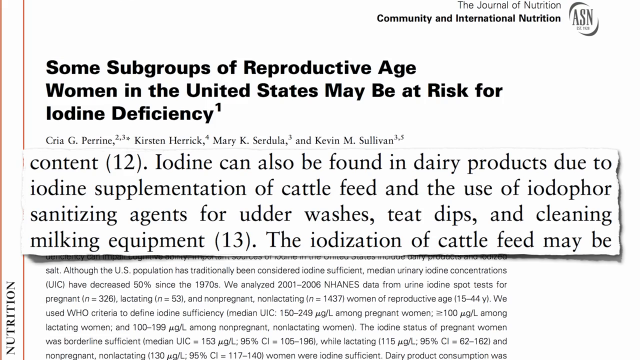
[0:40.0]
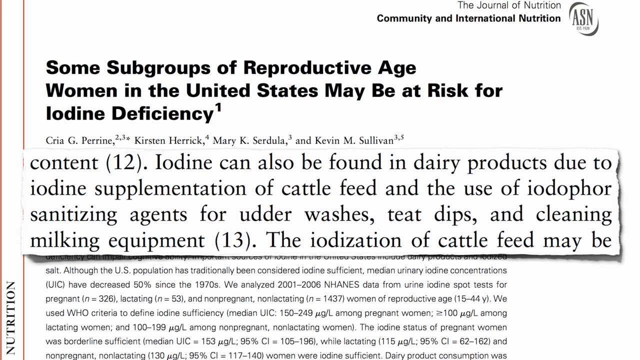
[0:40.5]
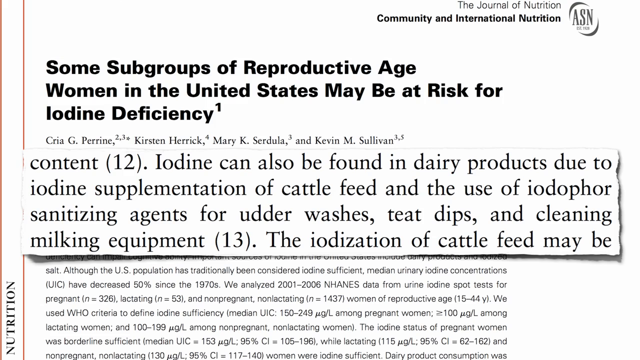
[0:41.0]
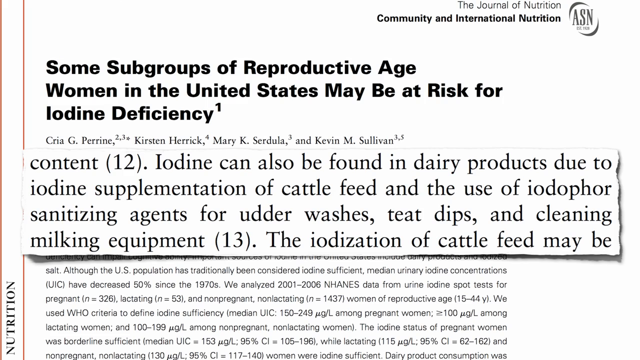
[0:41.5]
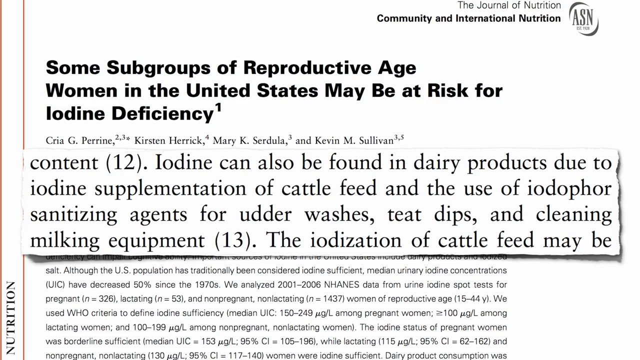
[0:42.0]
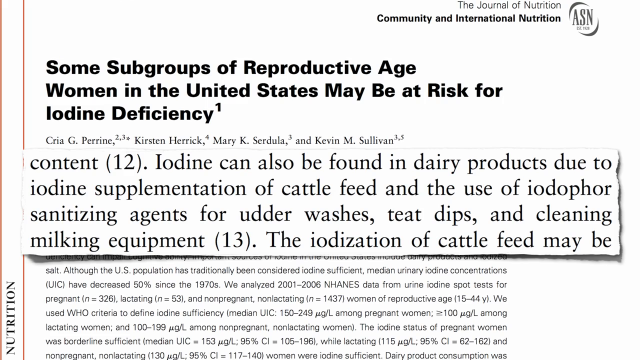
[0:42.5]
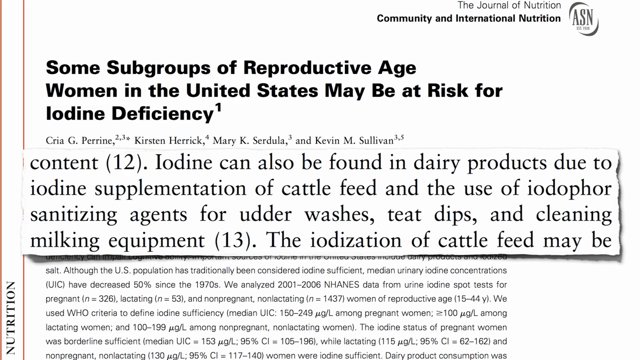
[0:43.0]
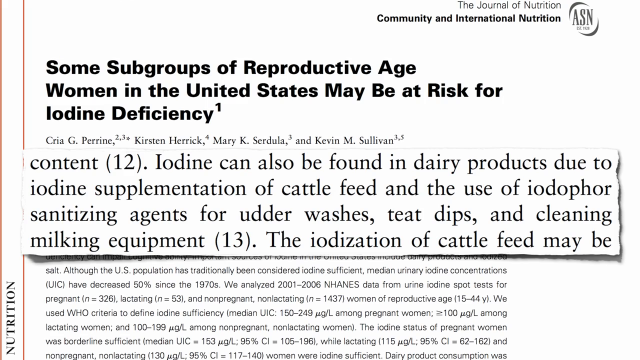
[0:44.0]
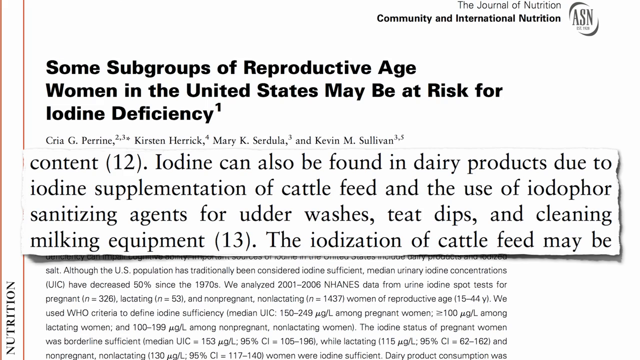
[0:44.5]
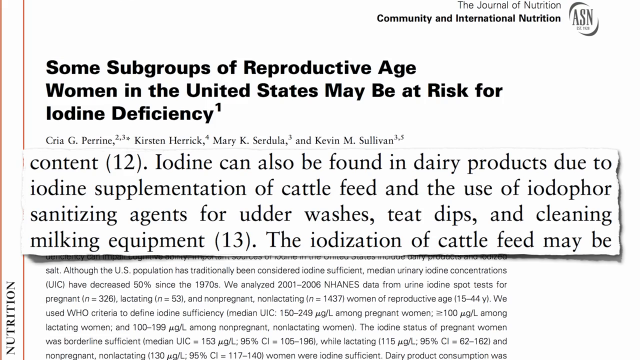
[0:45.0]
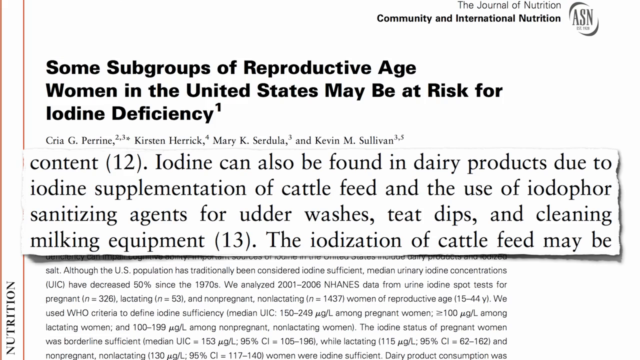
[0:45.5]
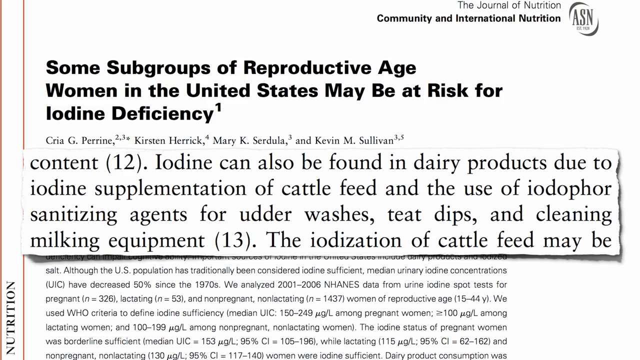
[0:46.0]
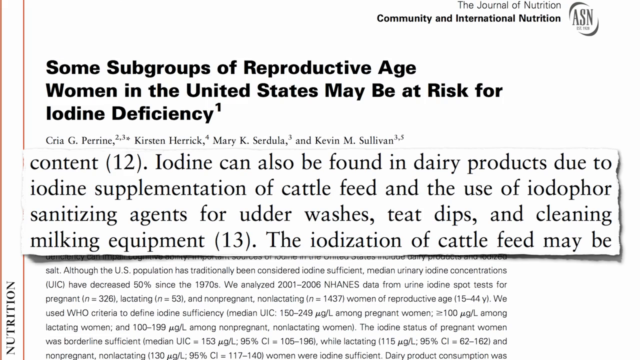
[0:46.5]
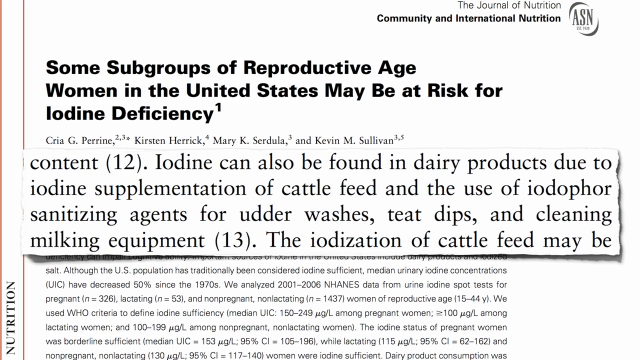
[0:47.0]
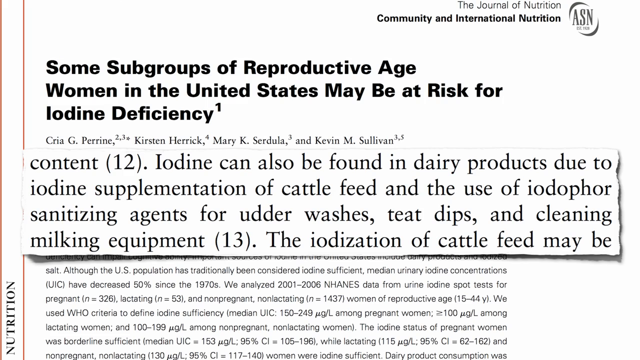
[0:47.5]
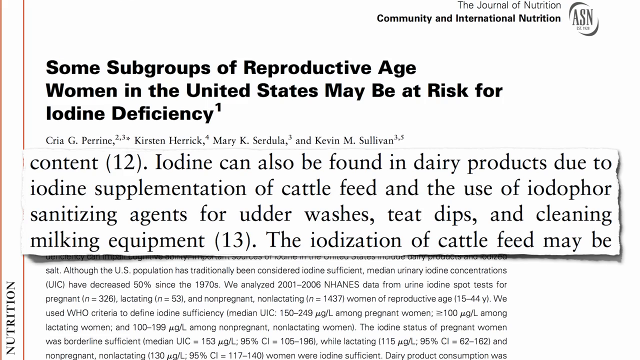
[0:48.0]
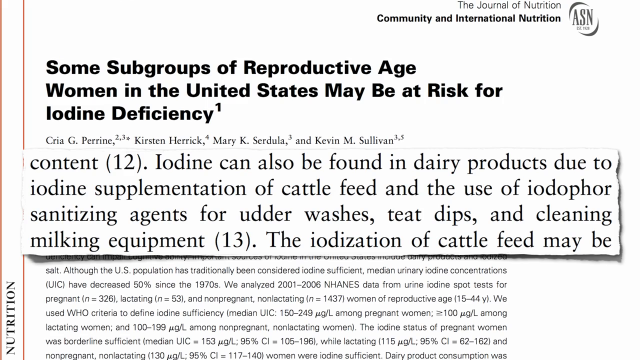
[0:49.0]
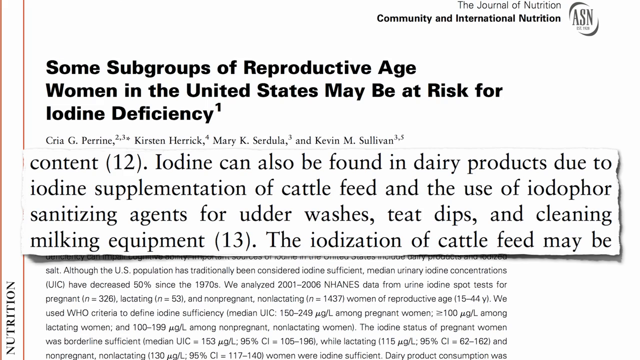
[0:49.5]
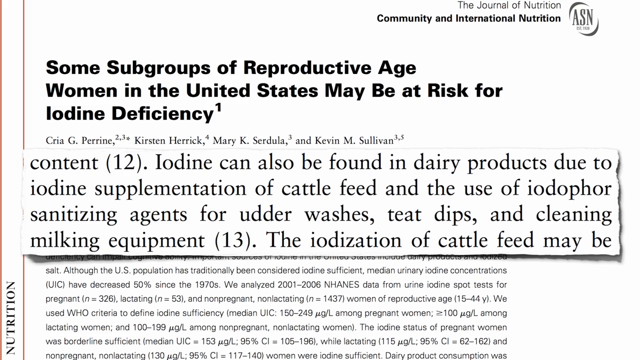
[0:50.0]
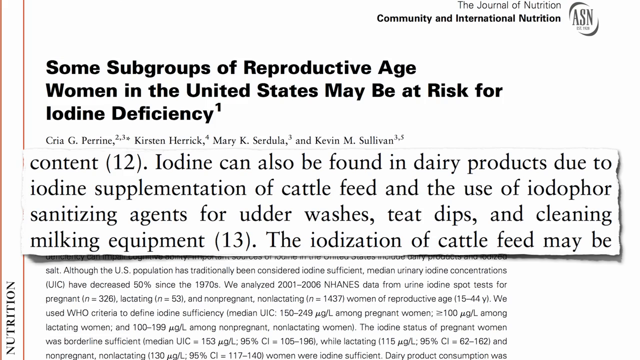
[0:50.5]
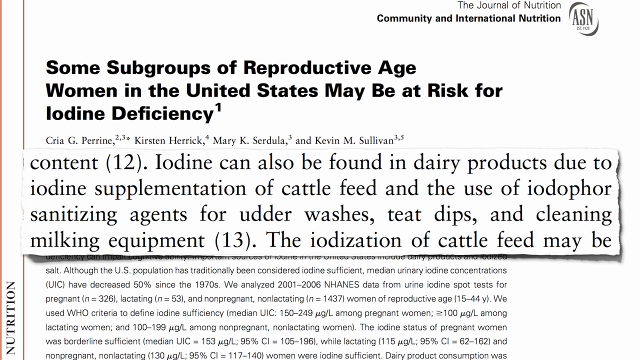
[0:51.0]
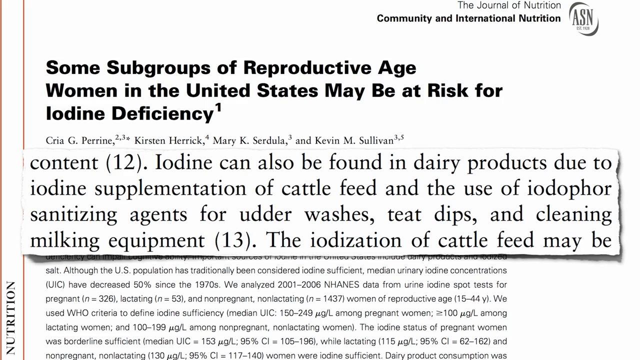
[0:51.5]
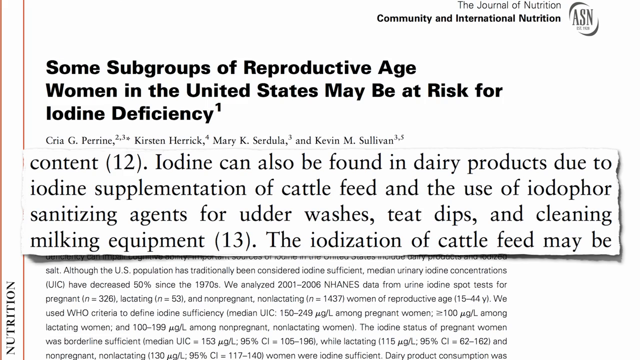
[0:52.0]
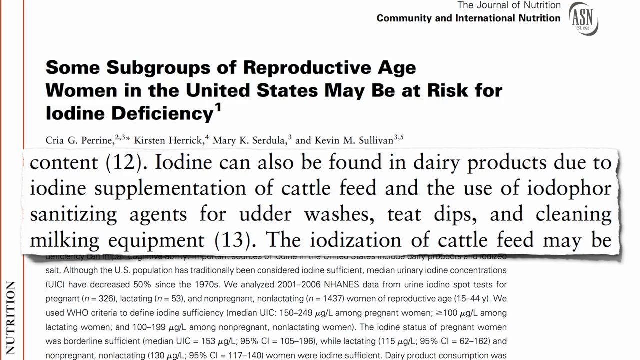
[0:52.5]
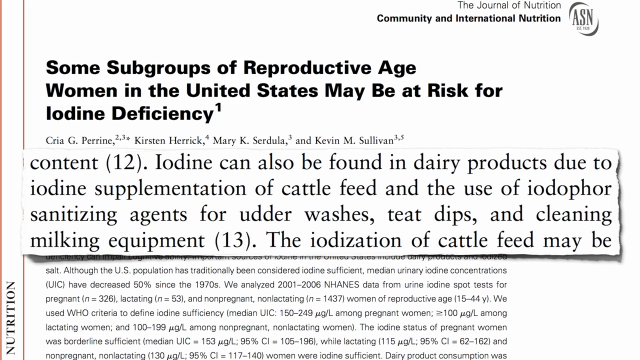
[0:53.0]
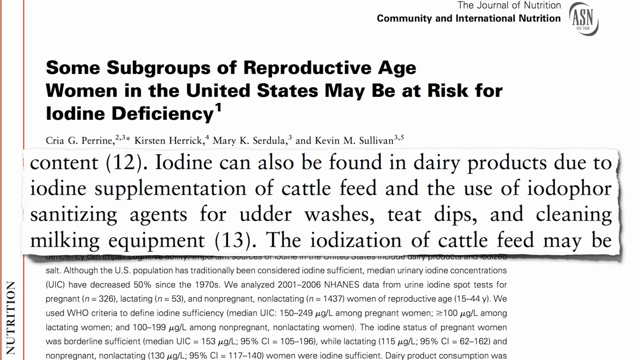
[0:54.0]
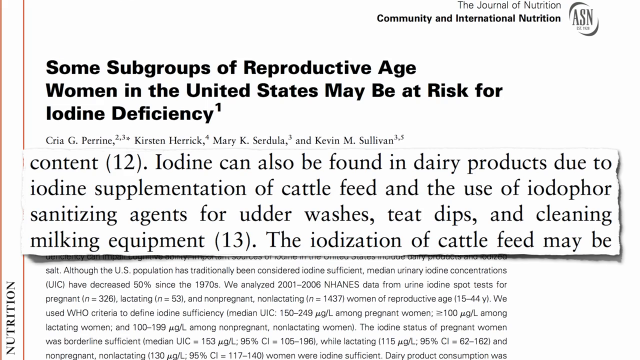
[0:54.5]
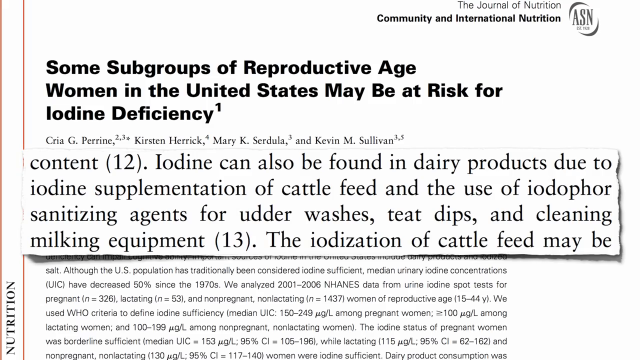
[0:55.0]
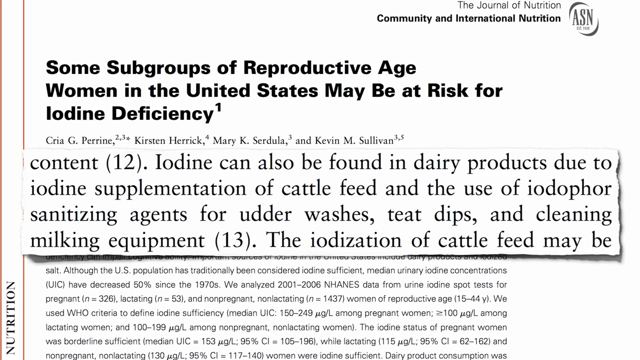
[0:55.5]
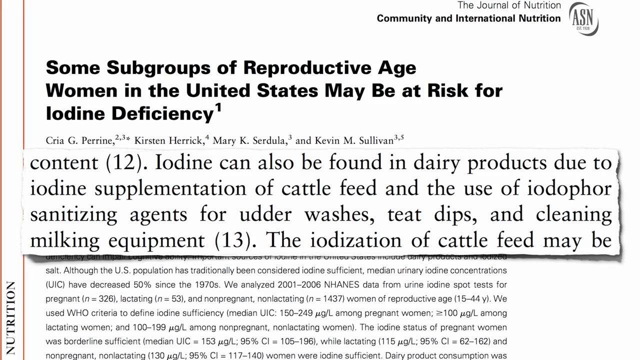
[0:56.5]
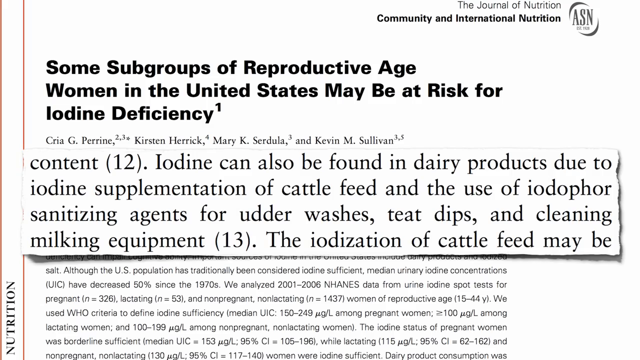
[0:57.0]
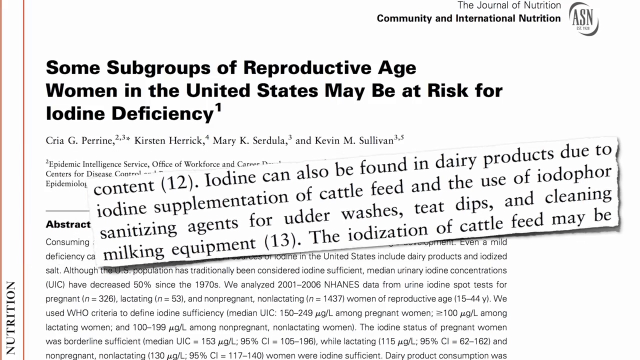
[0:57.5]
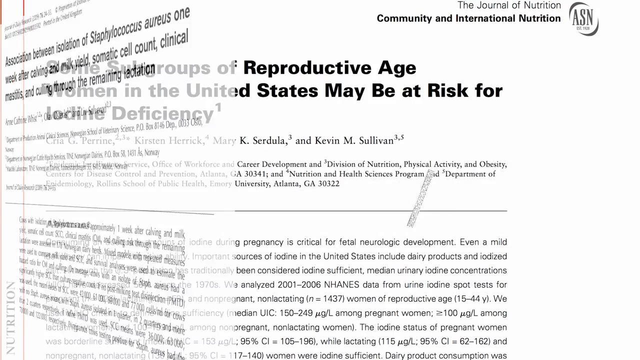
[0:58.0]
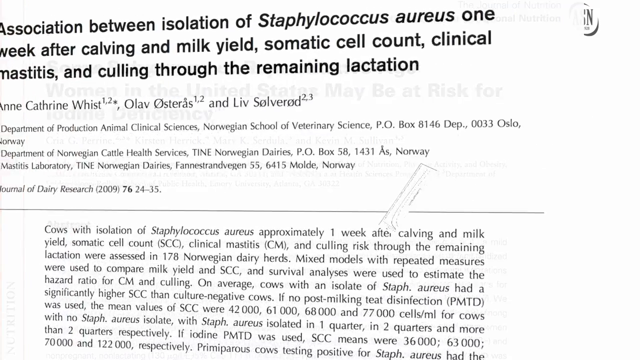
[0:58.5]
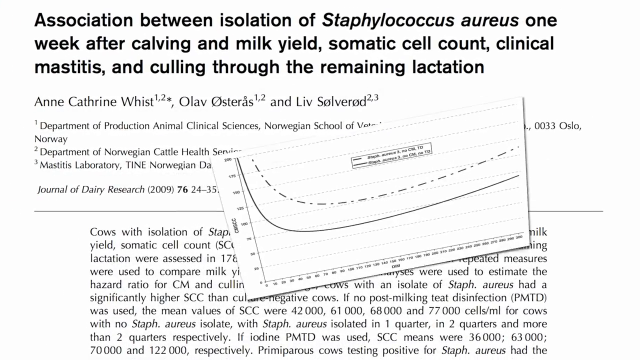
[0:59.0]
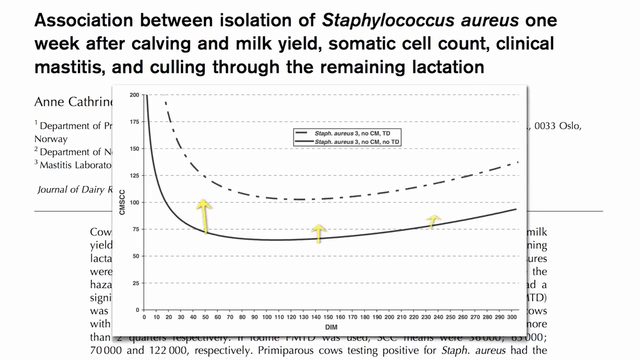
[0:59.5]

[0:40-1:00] Again the title "some subgroups of reproductive age women in the United States may be at risk for iodine deficiency" is shown. The text about iodine in dairy products due to iodine supplementation of cattle feed and the use of sanitizing agents for udder washes, teat dips, and cleaning milking equipment is then enlarged rather than highlighted. It changes to a page that says "the association between isolation of Staphylococcus aureus one week after calving and milk yield, somatic cell count, clinical mastitis, and culling through the remaining lactation." A graph shows two trend lines, one dashed and one solid, with arrows pointing up. The view then focuses back on the original title about subgroups of reproductive age women in the United States being at risk for iodine deficiency.